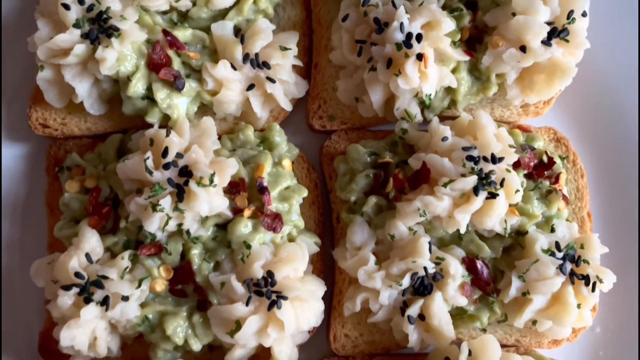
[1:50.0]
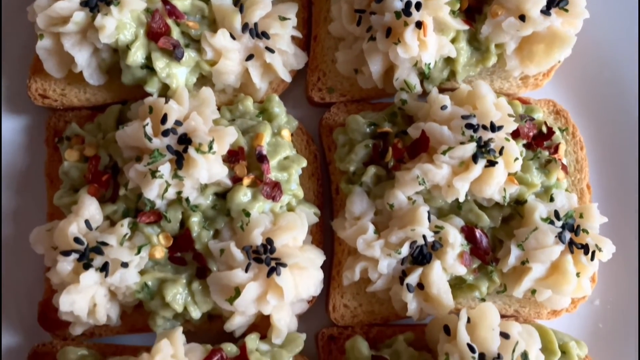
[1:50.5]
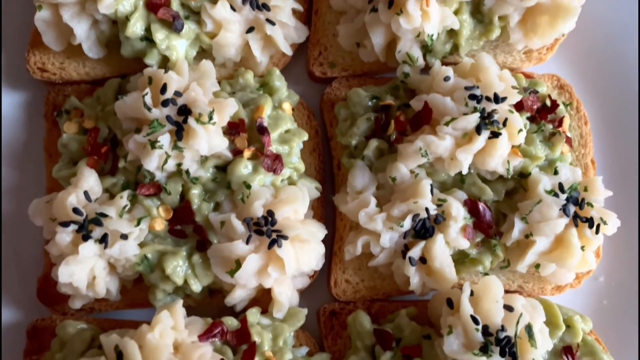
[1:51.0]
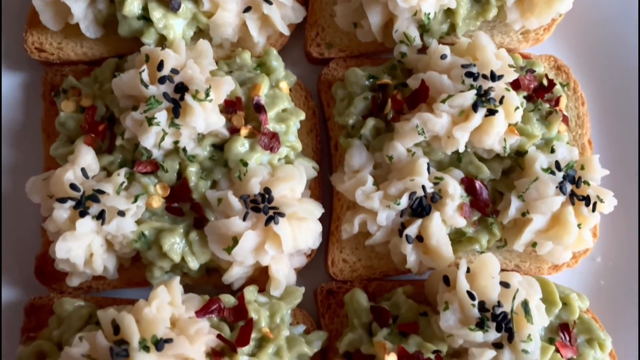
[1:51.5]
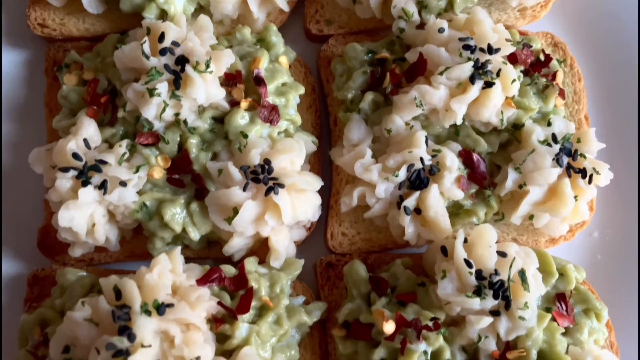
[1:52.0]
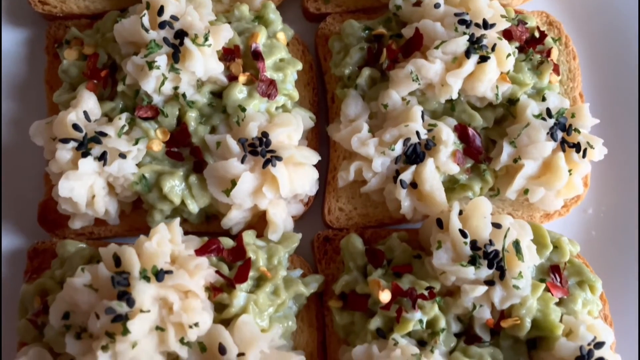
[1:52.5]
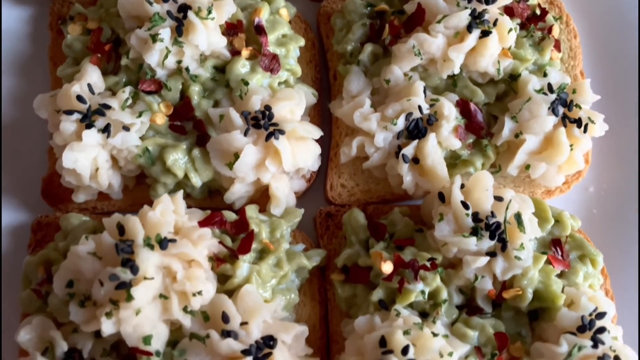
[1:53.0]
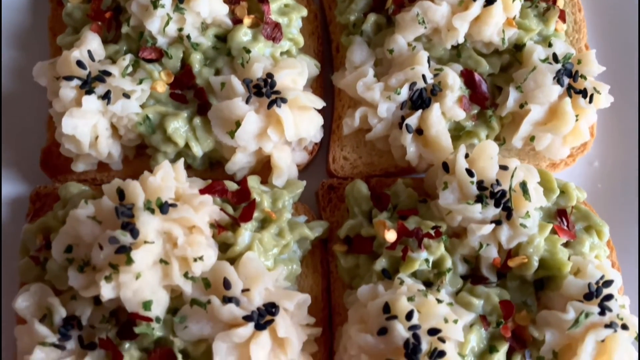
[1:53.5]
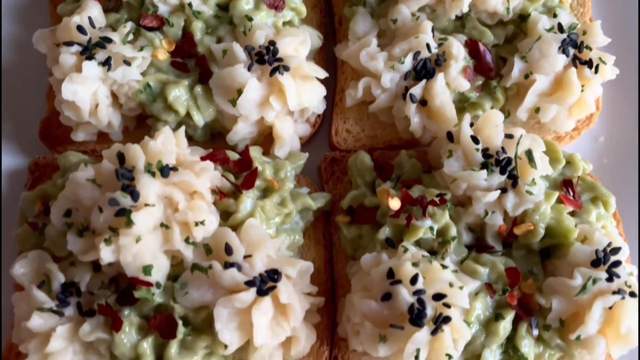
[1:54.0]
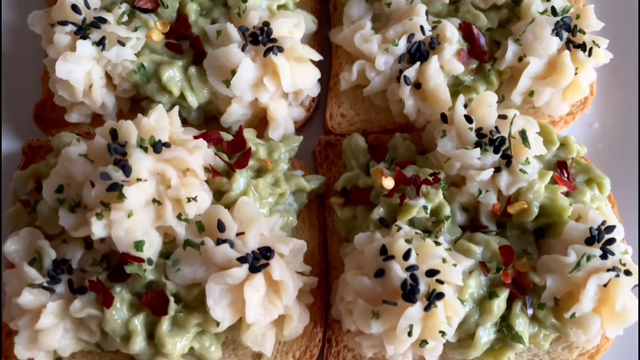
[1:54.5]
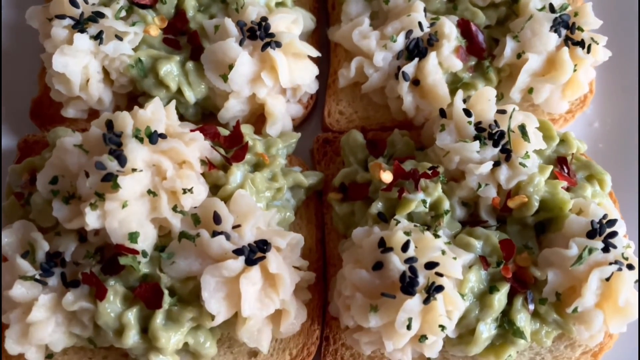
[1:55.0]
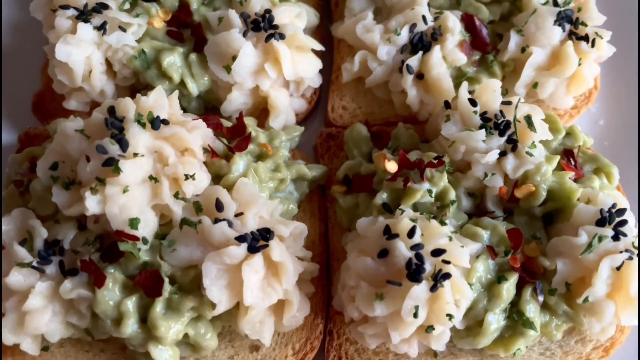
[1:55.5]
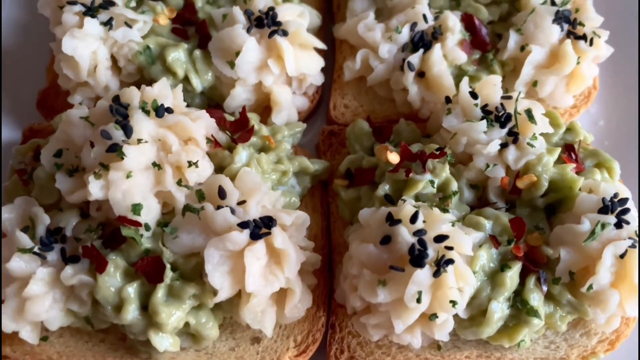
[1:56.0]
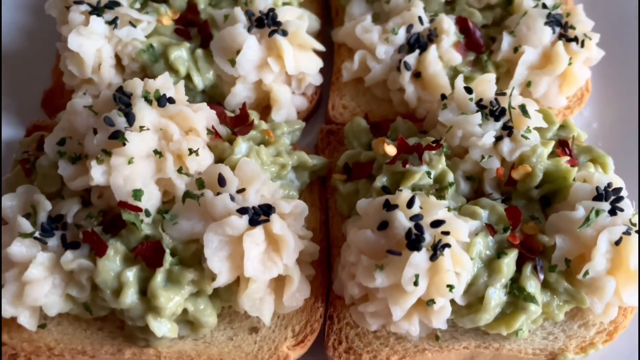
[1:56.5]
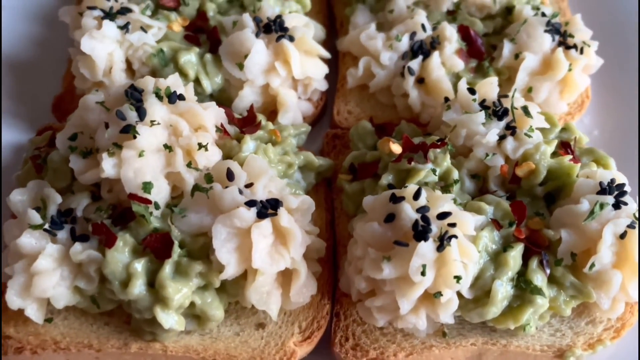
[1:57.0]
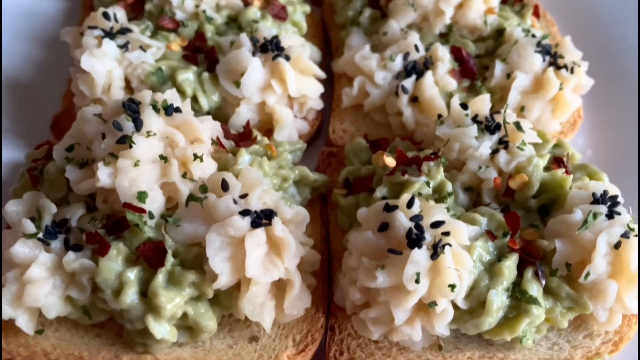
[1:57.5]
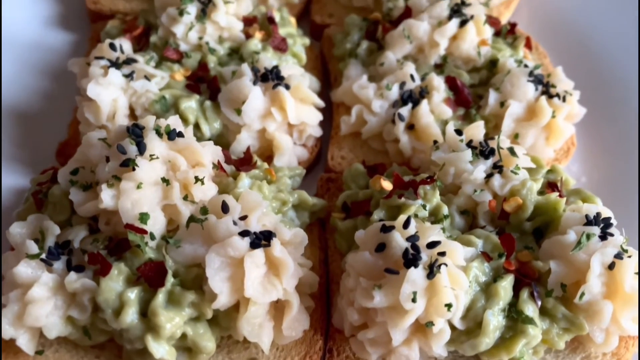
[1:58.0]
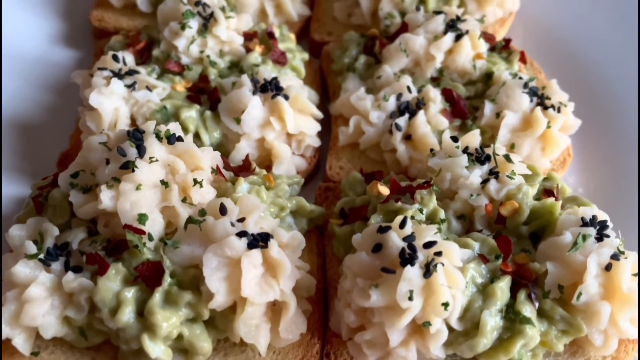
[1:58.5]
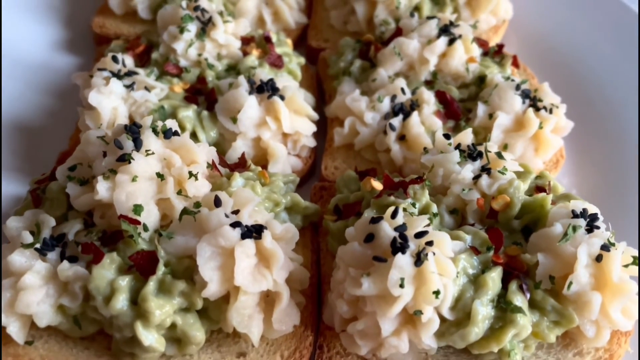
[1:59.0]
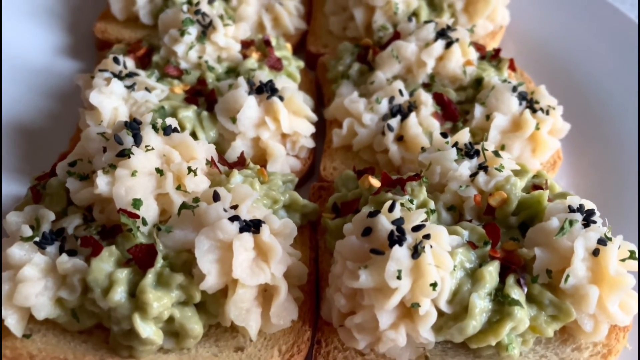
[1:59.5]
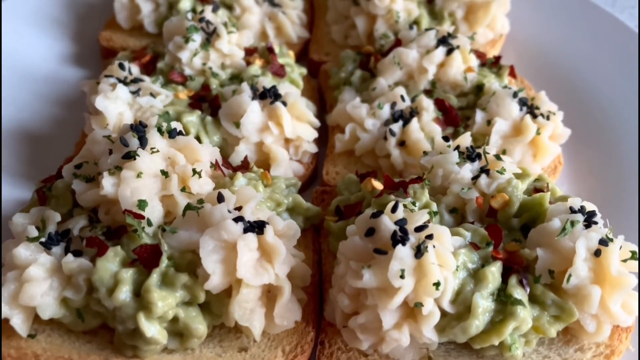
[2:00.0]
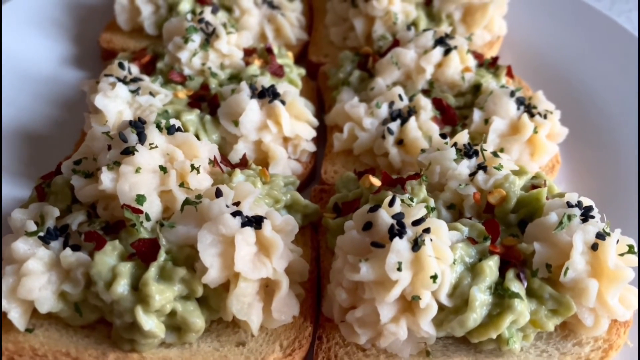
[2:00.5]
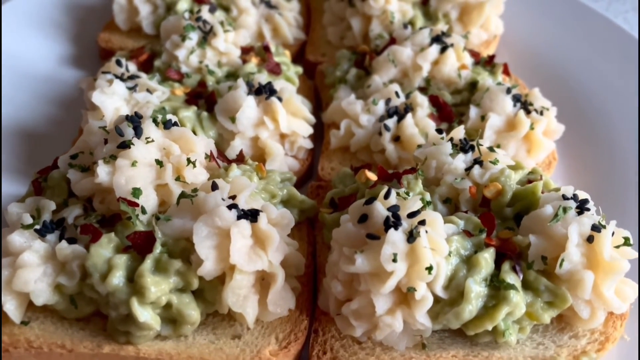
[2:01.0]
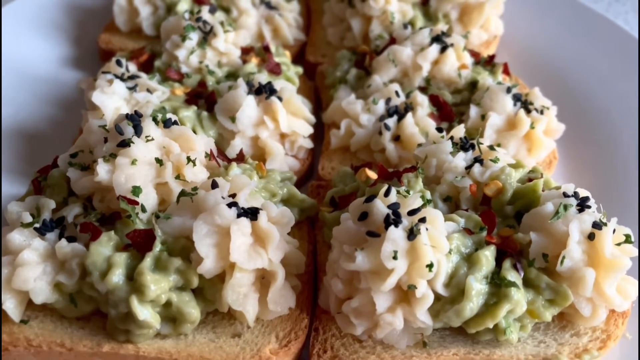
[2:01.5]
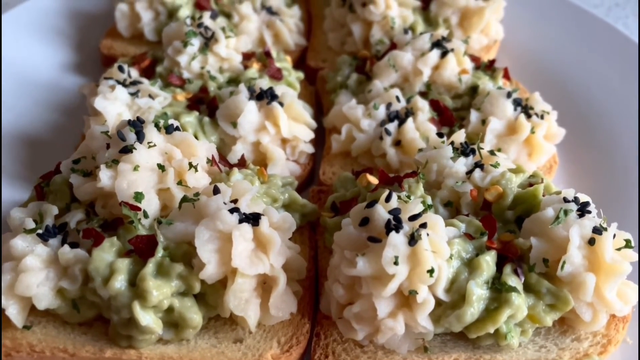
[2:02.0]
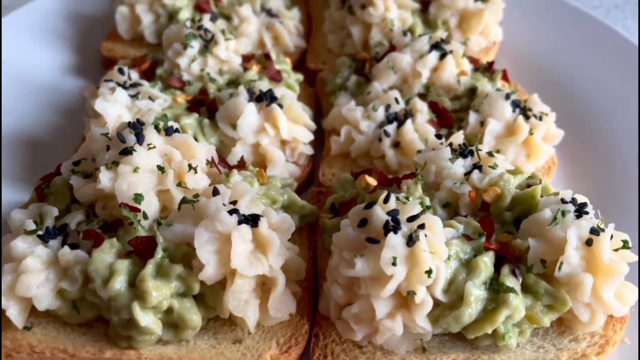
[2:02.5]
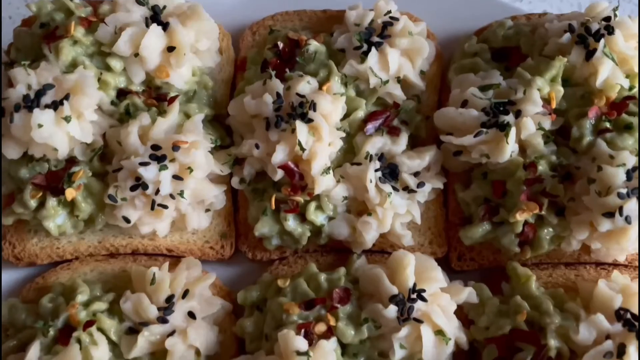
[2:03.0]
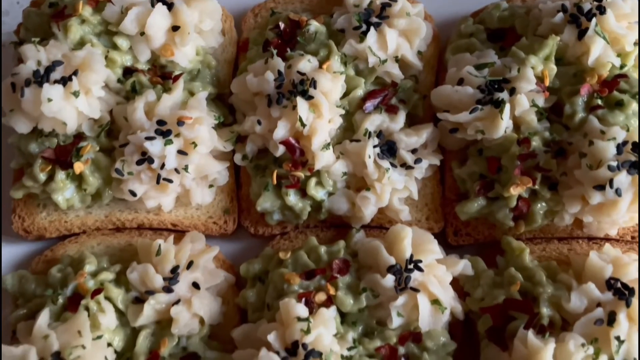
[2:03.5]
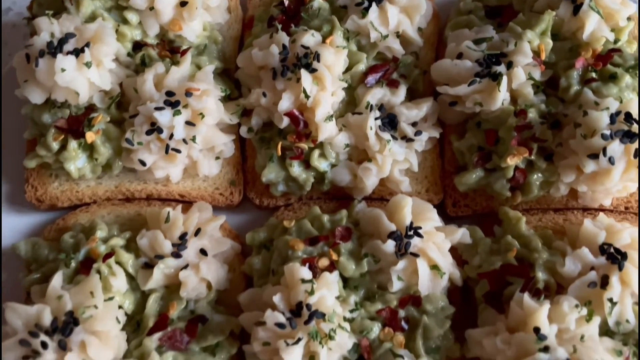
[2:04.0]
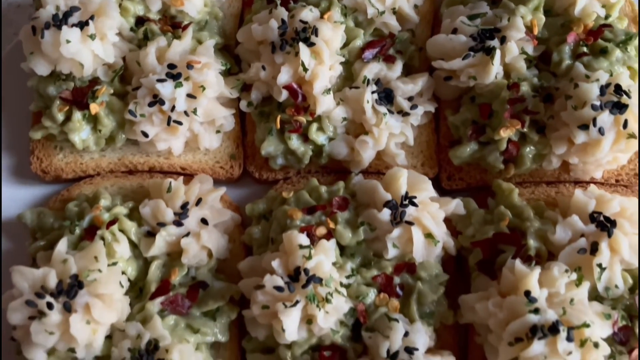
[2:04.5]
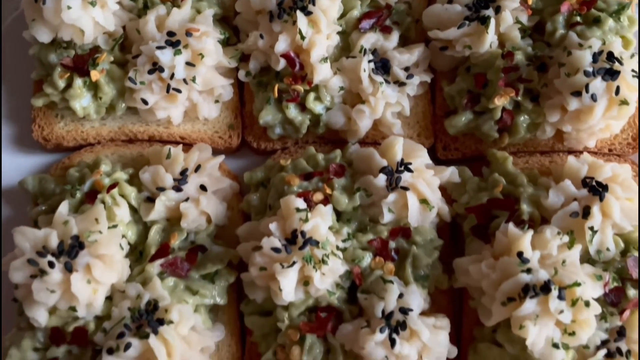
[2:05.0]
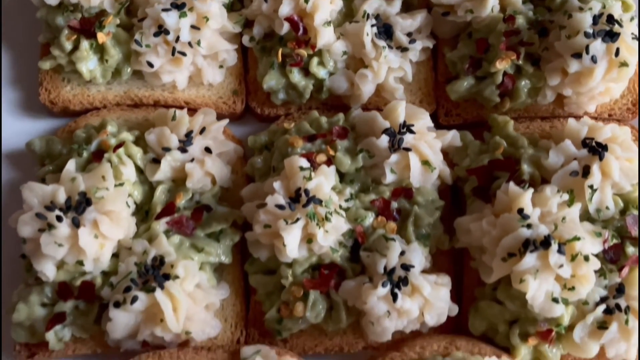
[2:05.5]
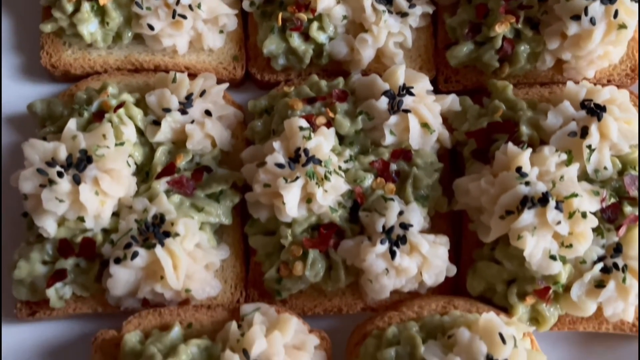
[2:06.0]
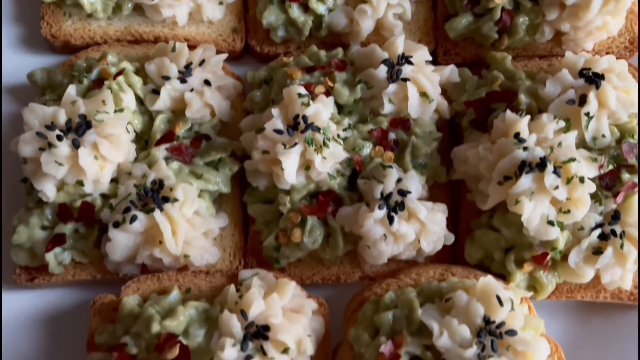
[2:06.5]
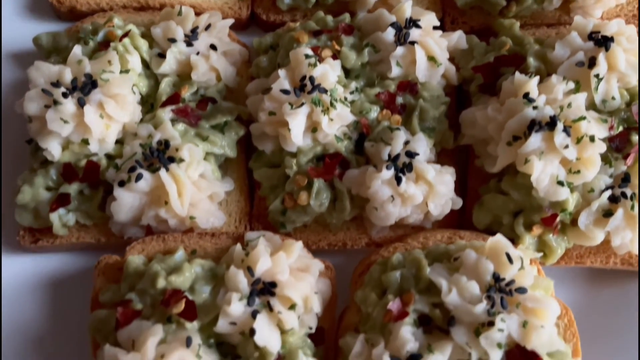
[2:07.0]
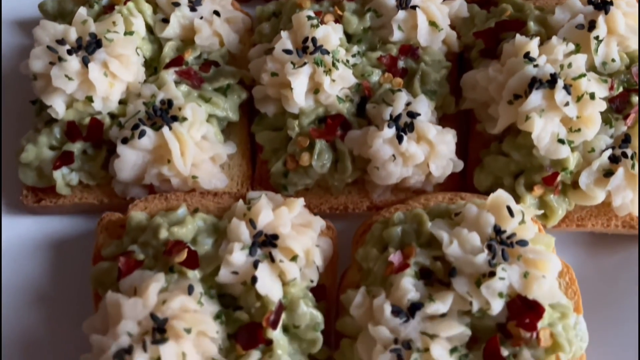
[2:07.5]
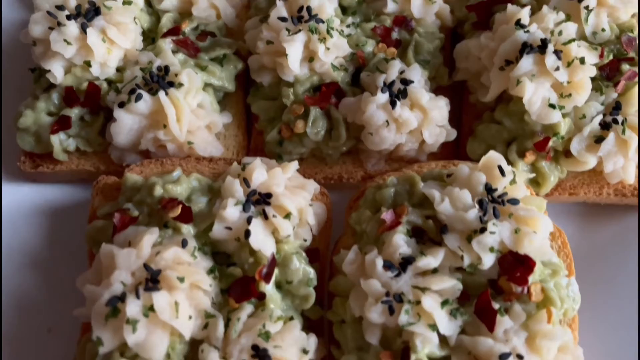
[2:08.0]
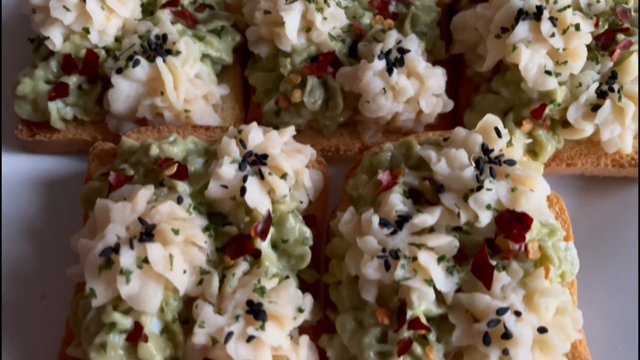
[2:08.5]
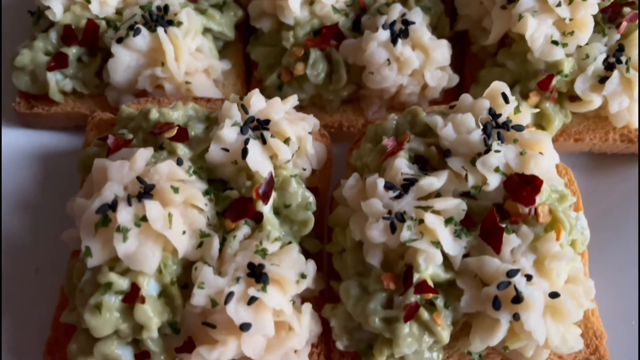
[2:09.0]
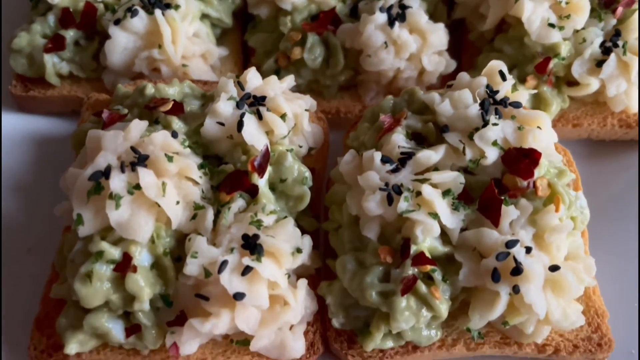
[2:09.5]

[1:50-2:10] A white plate holds six pieces of mini toast covered in an avocado and potato mixture topped with black and red peppers, organized in two columns and three rows. The camera pans down the six pieces of mini toast on the white plate. The angle then changes to show all six pieces at once, and then changes again so the toast is arranged in two rows and three columns on the white plate. The camera begins panning down the white plate, showing the six pieces from another angle, and focuses on a new row with two pieces of mini toast at the end of the plate.